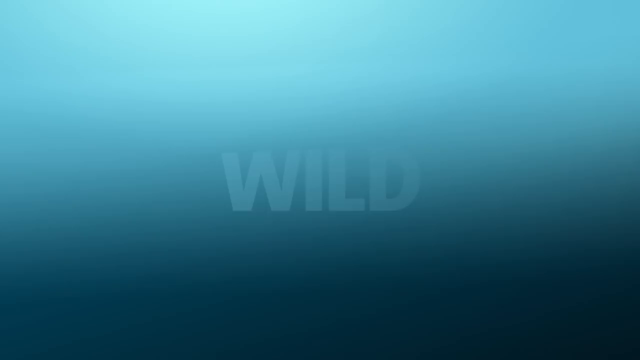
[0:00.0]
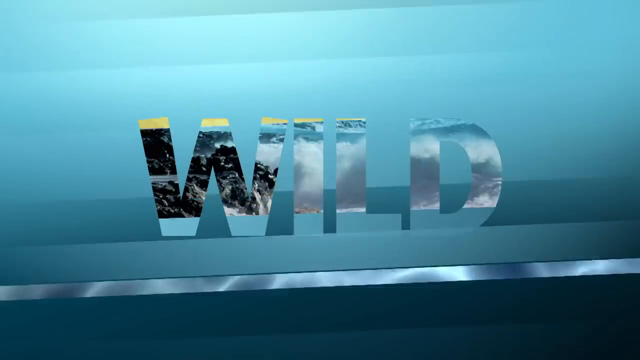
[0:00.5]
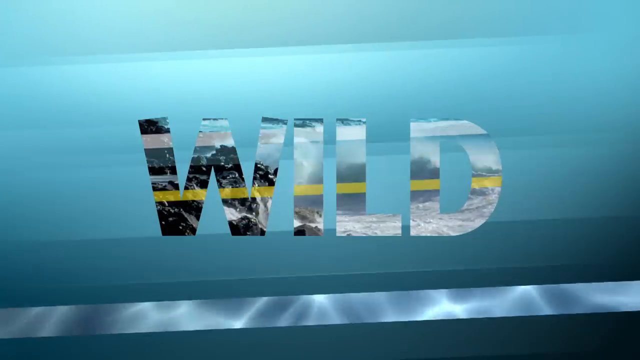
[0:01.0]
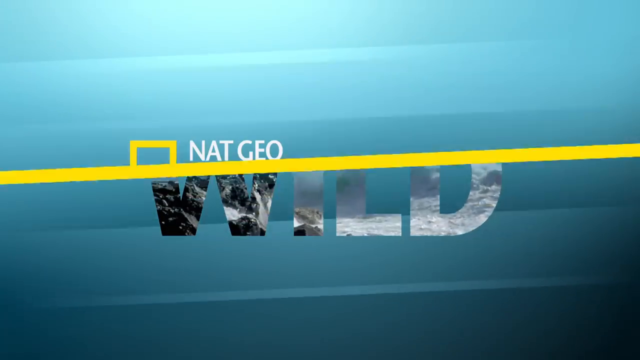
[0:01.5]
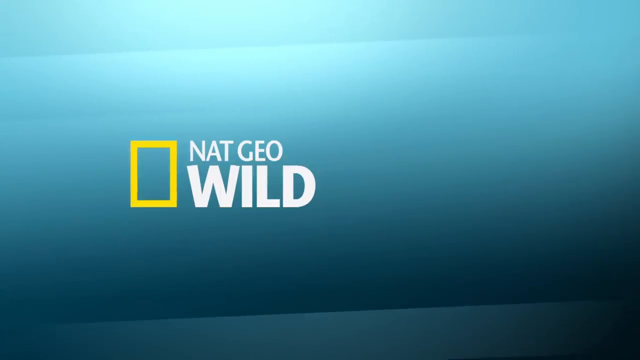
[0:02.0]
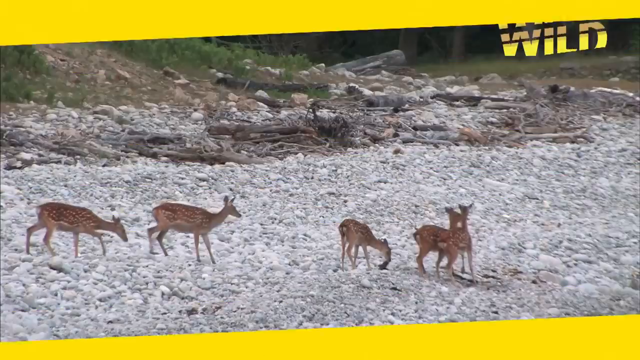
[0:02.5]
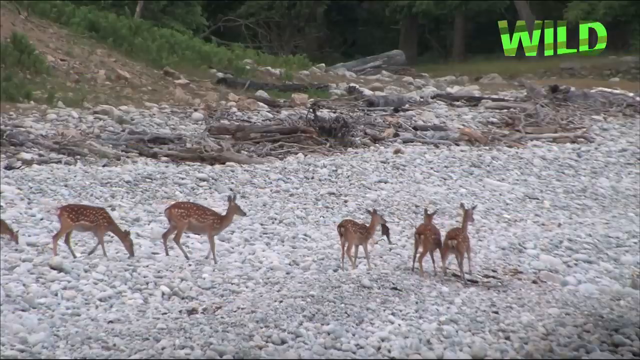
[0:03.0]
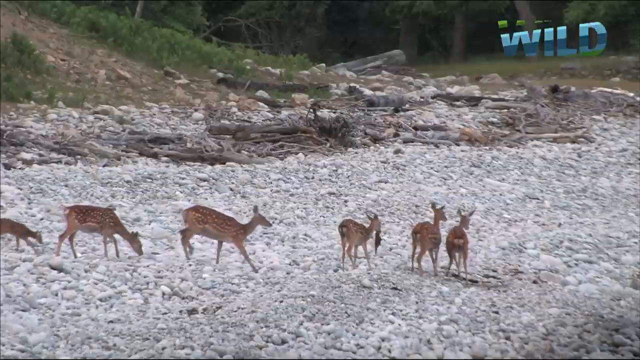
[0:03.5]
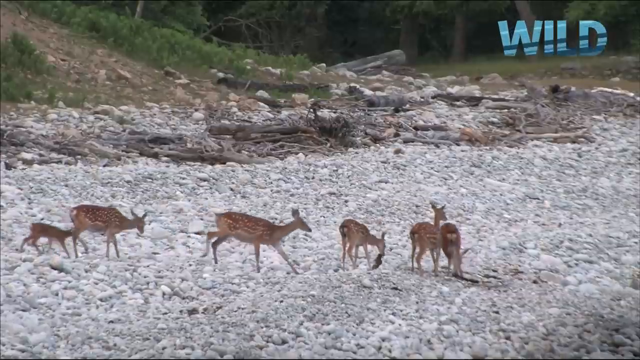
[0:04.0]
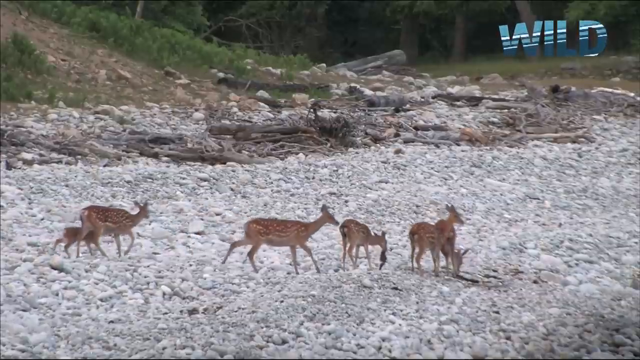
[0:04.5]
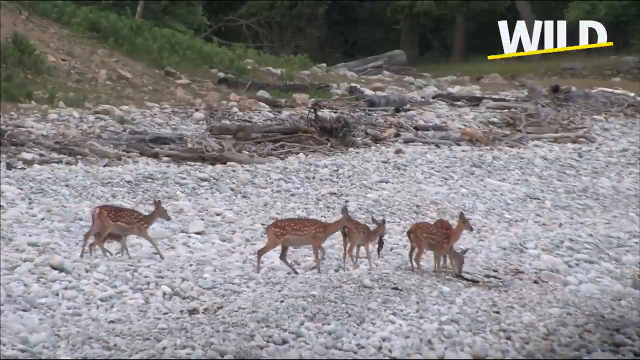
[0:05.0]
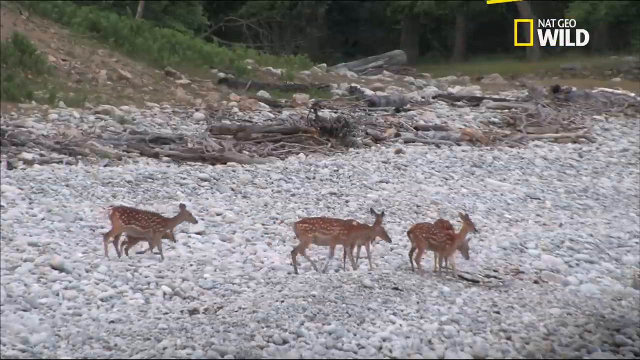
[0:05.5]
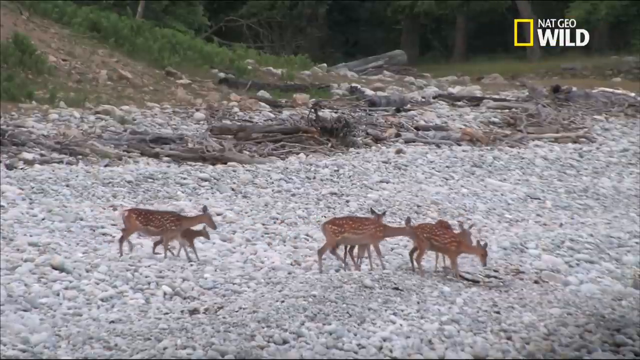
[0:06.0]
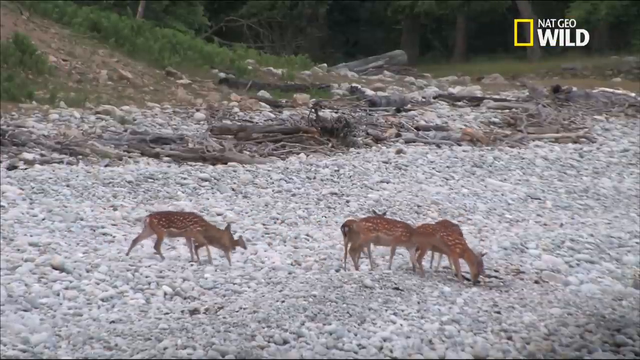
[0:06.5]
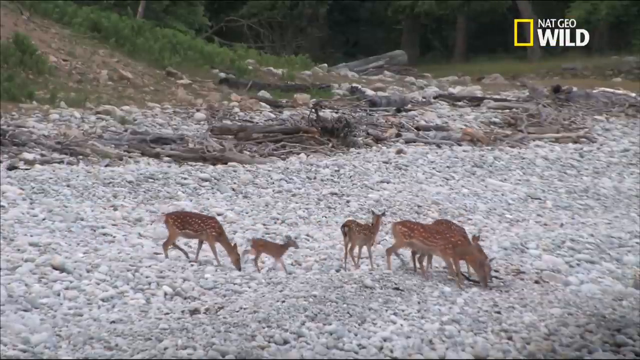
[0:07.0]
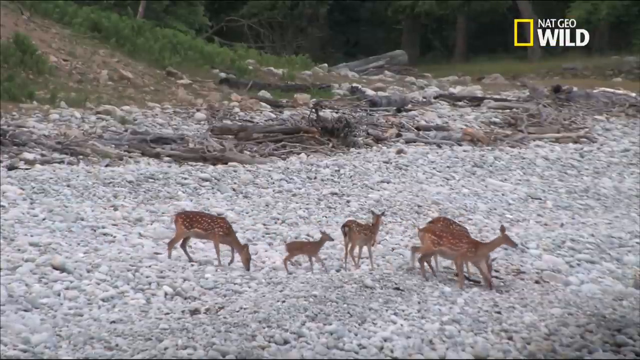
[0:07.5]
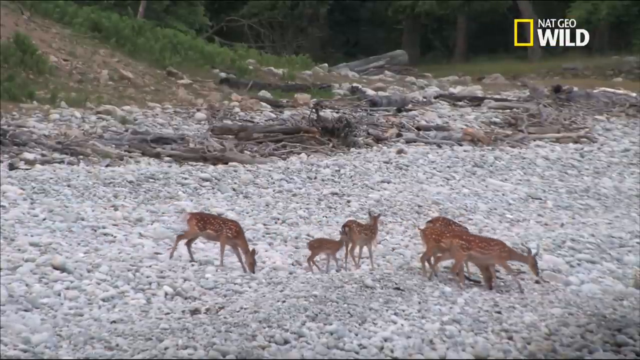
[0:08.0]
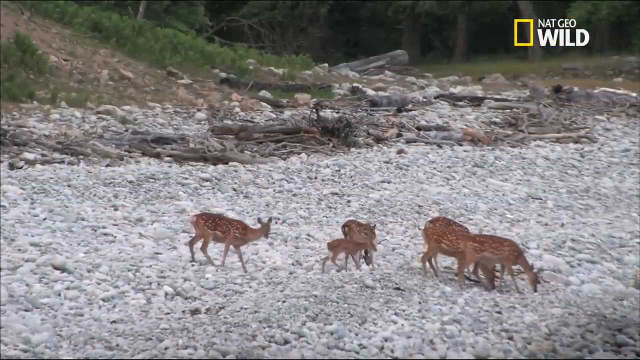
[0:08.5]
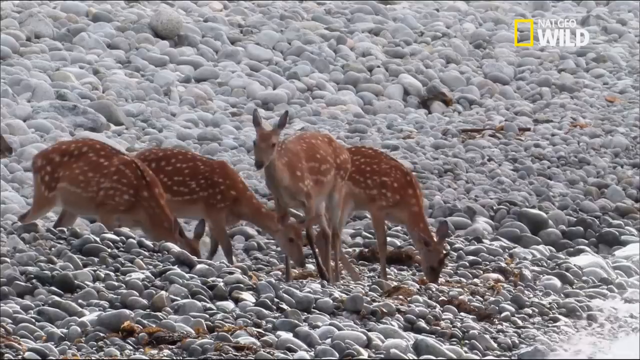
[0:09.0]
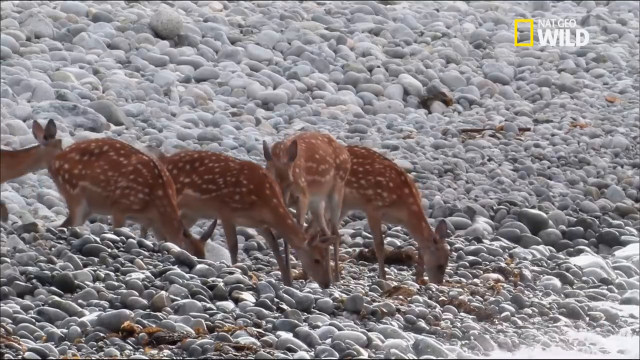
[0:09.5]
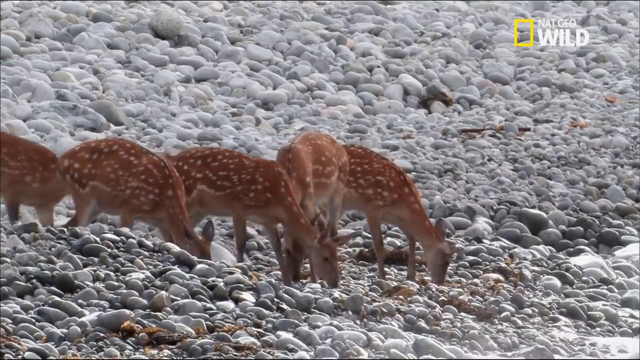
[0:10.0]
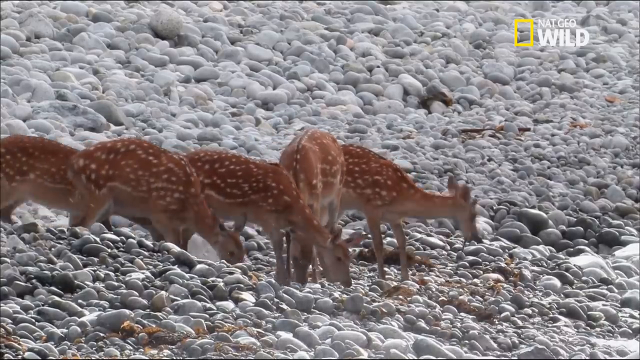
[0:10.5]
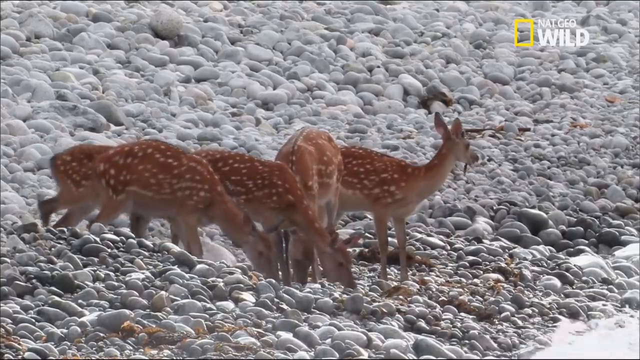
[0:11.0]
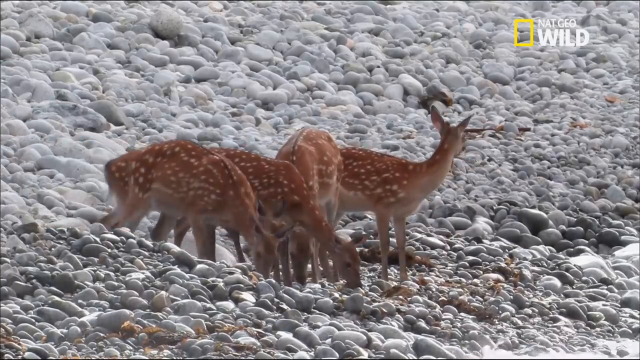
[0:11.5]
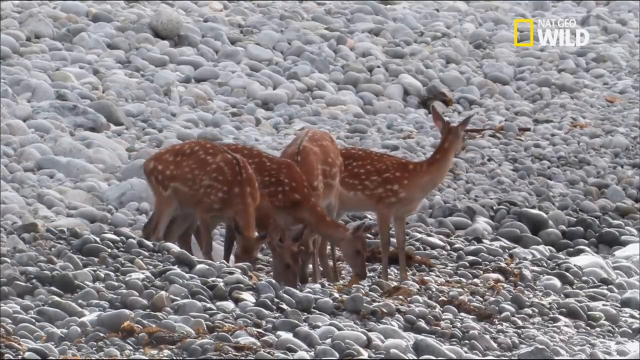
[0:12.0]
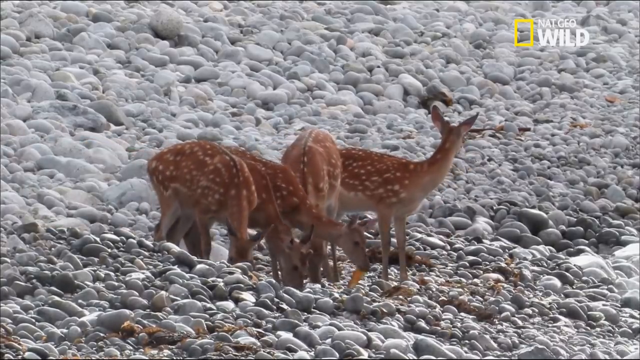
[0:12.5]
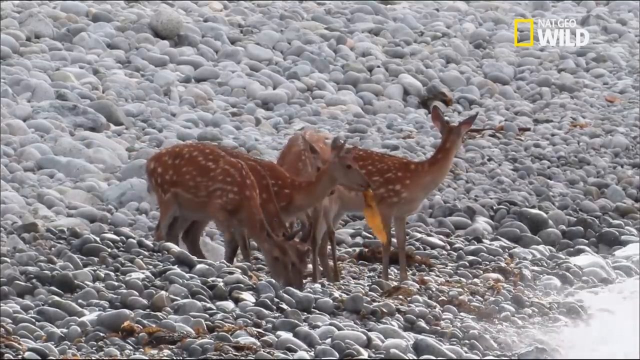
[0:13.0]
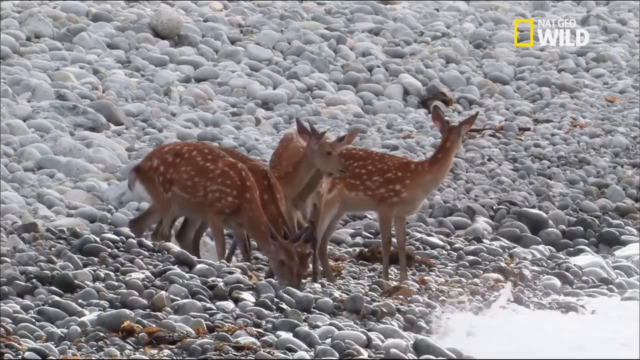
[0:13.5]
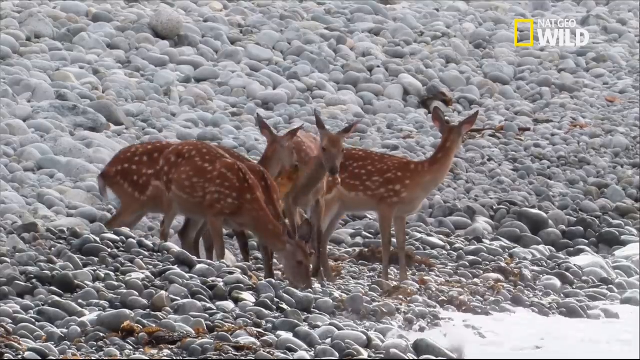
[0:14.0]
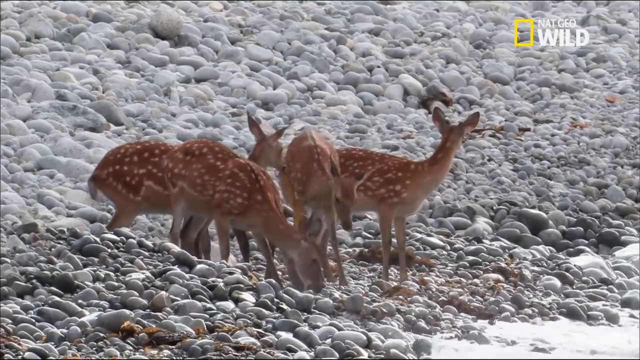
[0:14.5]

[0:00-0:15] The video opens with a blue intro screen that says "Wild" and "Nat Geo Wild." Then the side of a cliff appears, with many white rocks spread out across the shoreline and a backdrop of green grass behind it. Three deer, which seem very small, are on the right side of the frame, and three more deer walk up on the left. The deer walk across the white rocks in front of the shoreline. In the top right corner, a logo says "Wild" and then flips over to say "Nat Geo Wild." The deer seem to be a family, searching for food along the coastline, and as they eat off the shore, water splashes up to the right. There are six deer; one is very small and looks to be an offspring, while the rest seem to be full-sized adults.